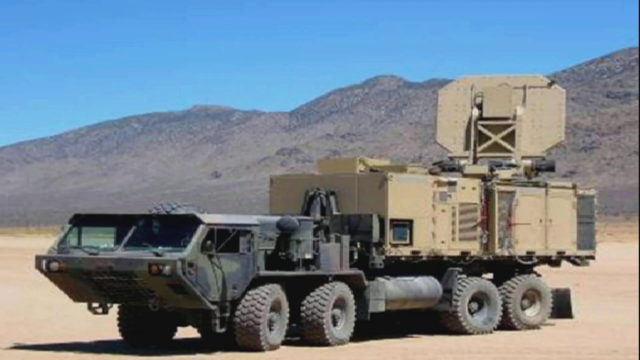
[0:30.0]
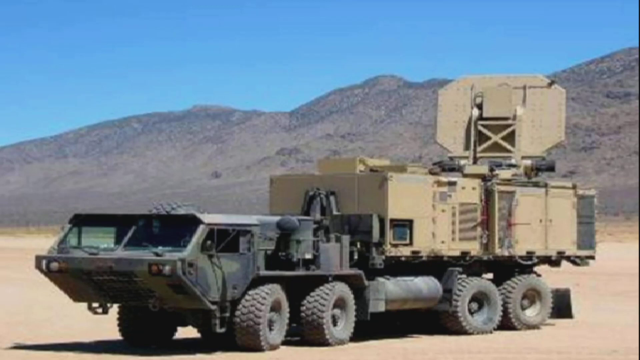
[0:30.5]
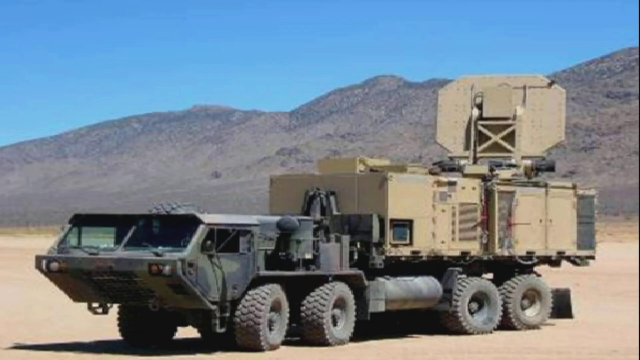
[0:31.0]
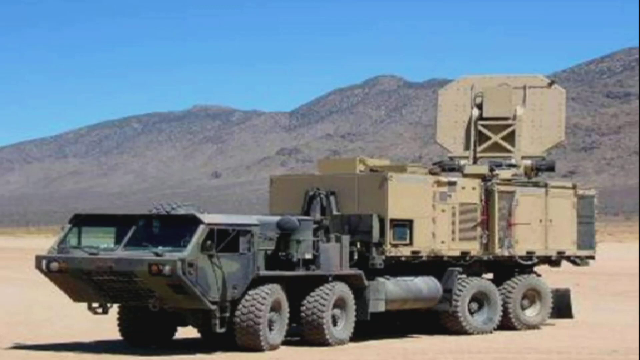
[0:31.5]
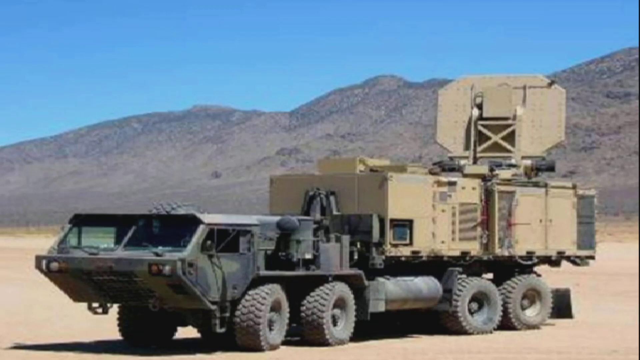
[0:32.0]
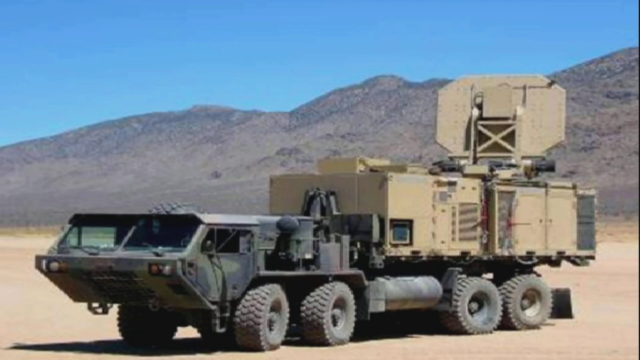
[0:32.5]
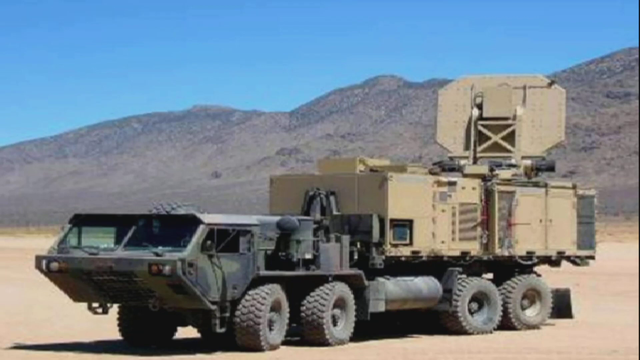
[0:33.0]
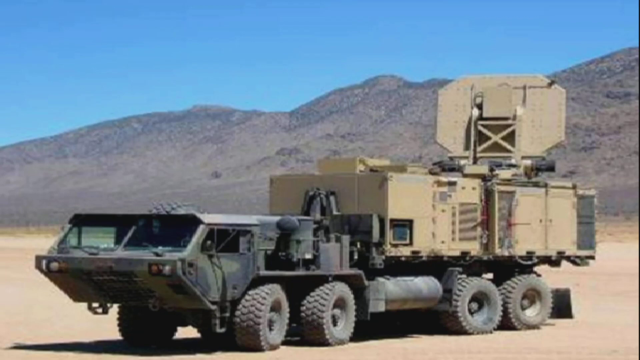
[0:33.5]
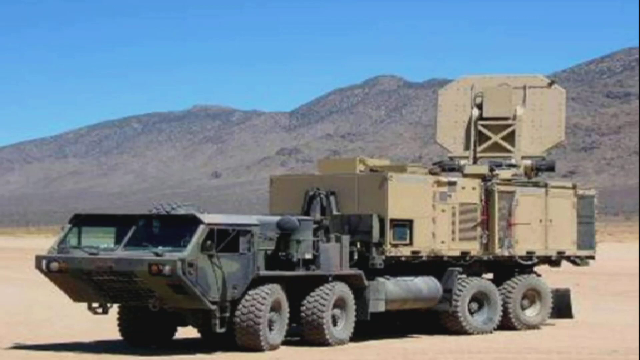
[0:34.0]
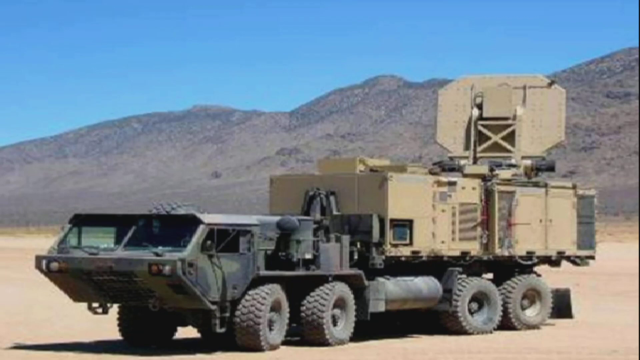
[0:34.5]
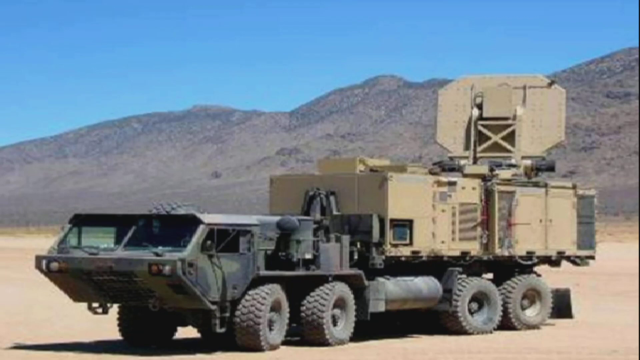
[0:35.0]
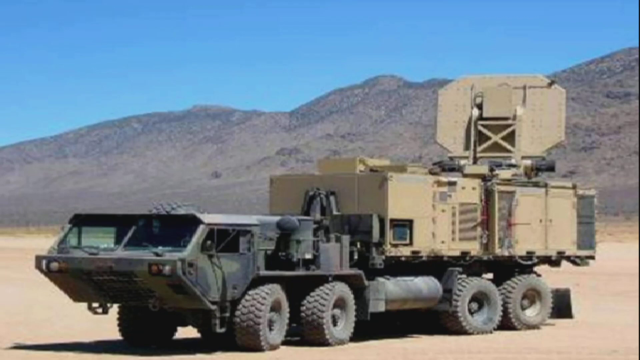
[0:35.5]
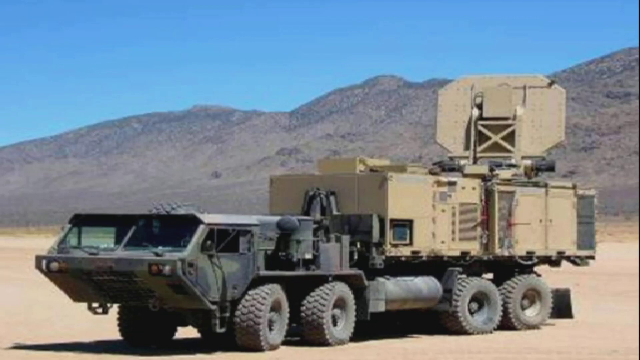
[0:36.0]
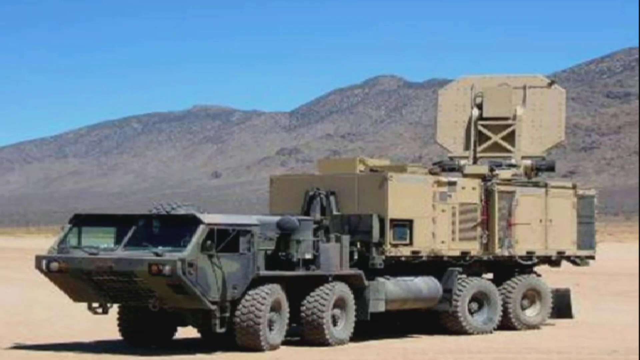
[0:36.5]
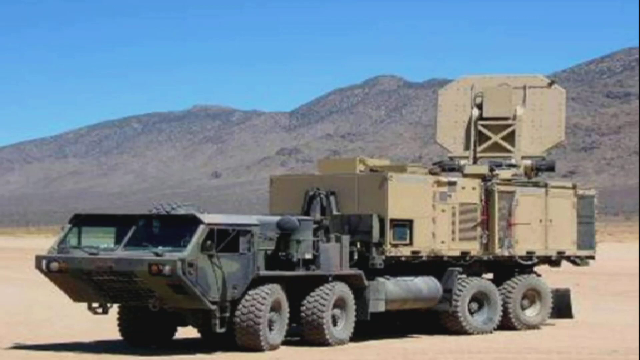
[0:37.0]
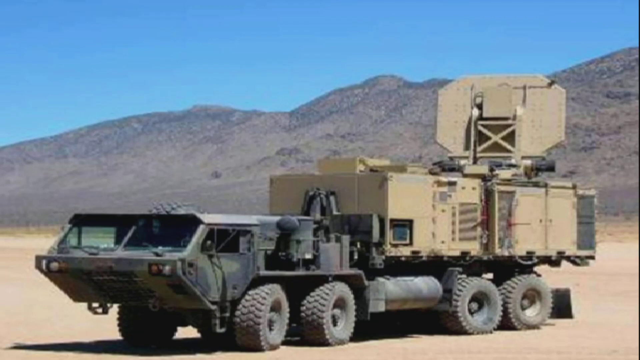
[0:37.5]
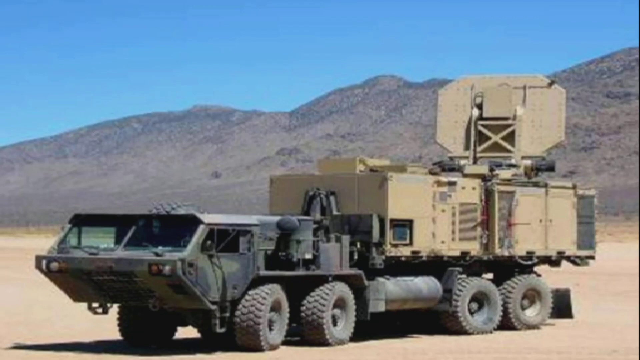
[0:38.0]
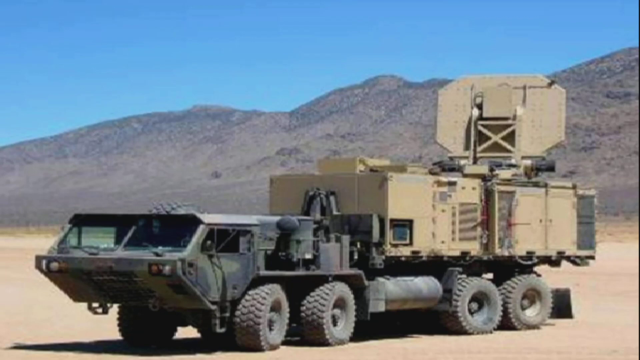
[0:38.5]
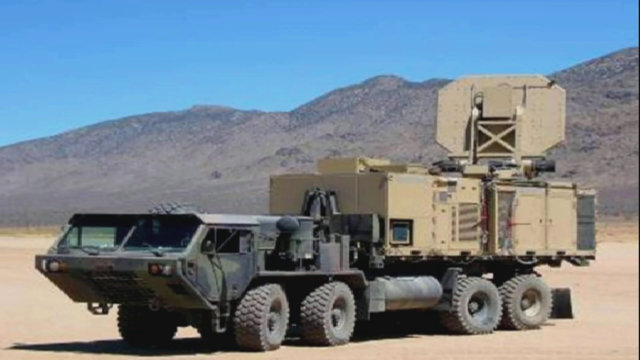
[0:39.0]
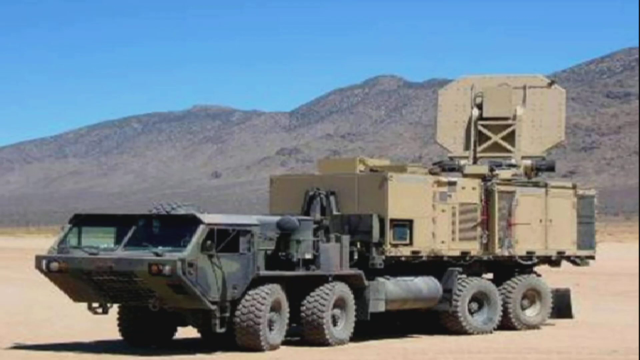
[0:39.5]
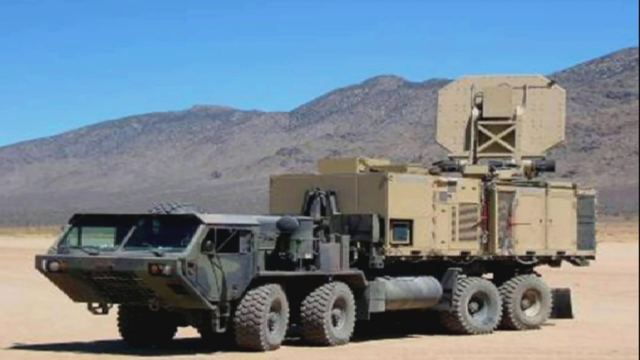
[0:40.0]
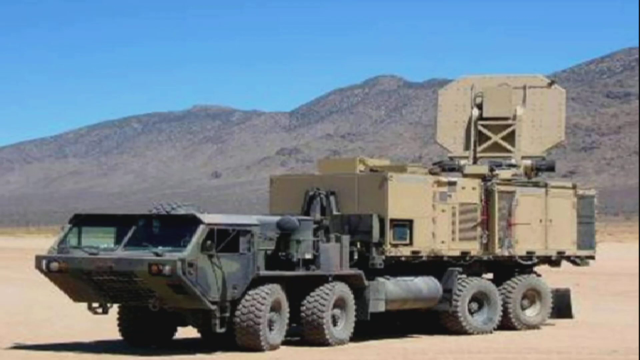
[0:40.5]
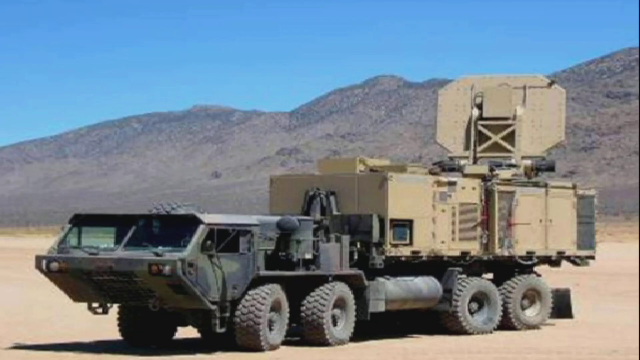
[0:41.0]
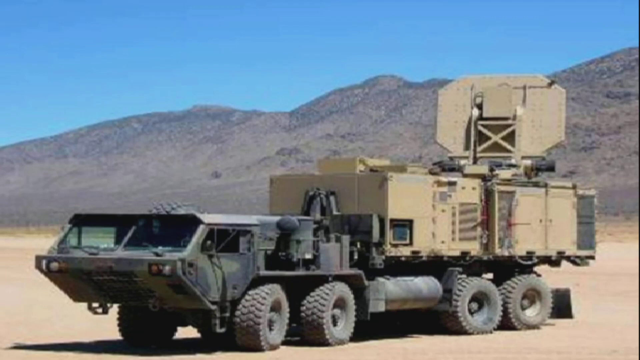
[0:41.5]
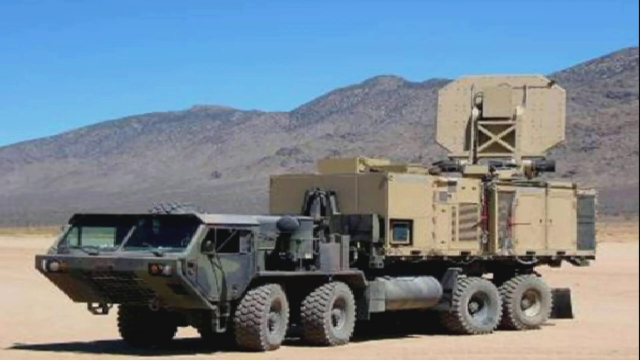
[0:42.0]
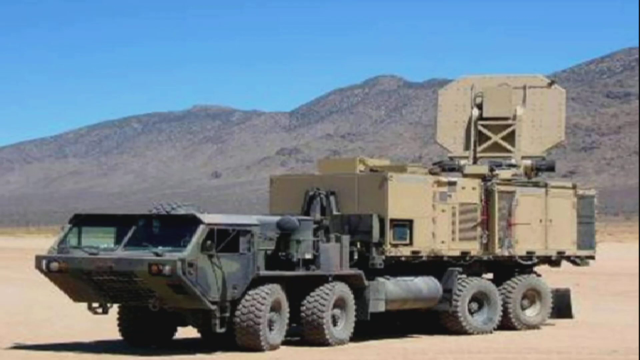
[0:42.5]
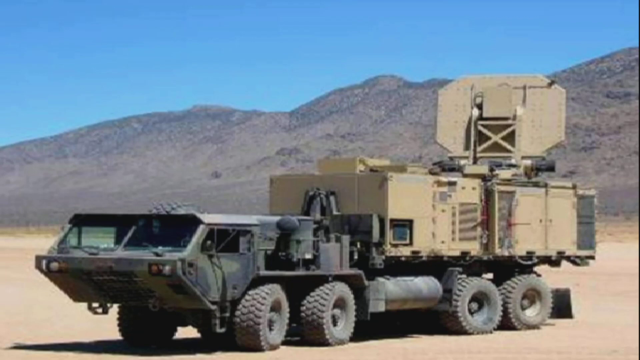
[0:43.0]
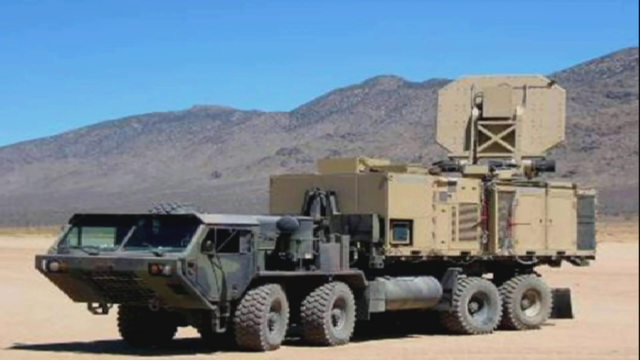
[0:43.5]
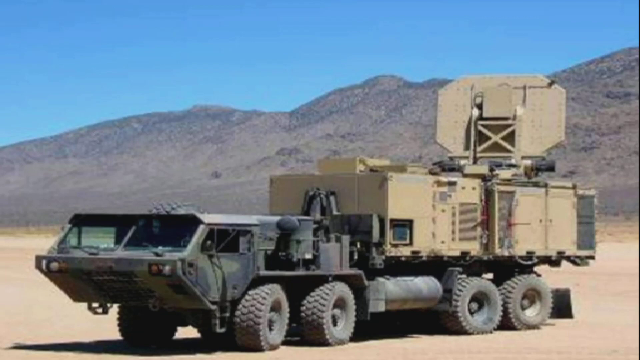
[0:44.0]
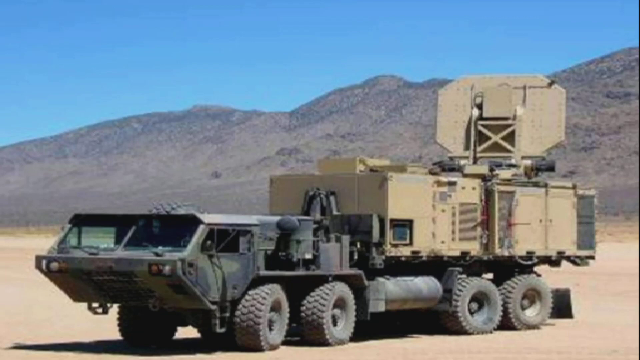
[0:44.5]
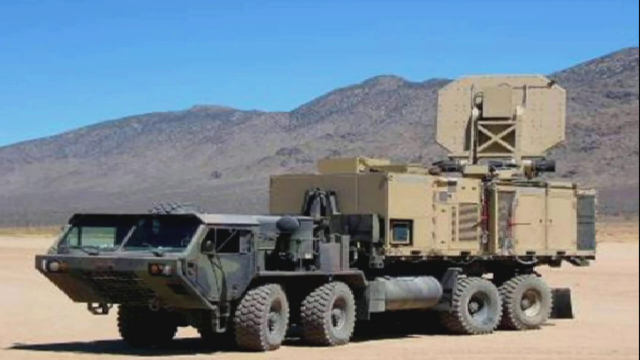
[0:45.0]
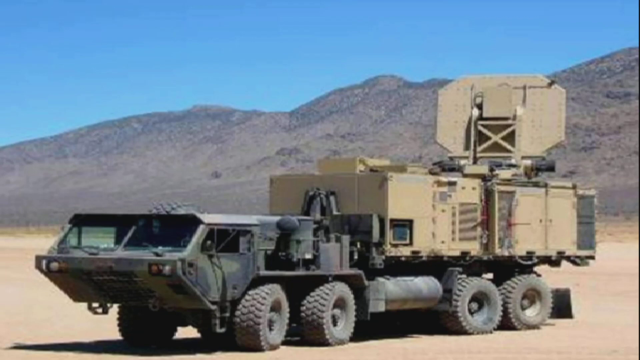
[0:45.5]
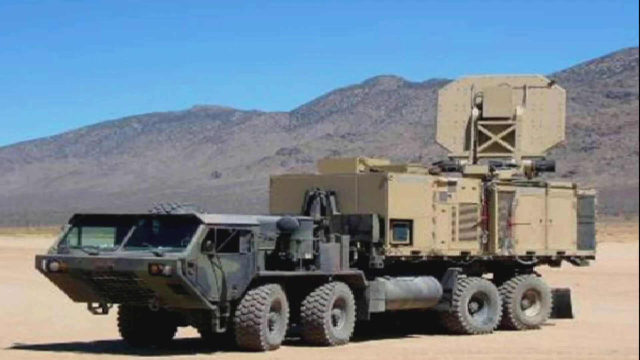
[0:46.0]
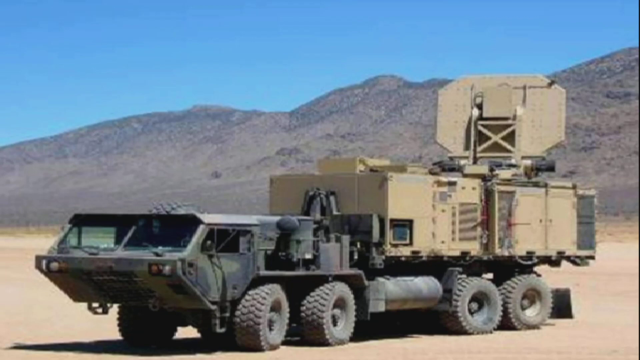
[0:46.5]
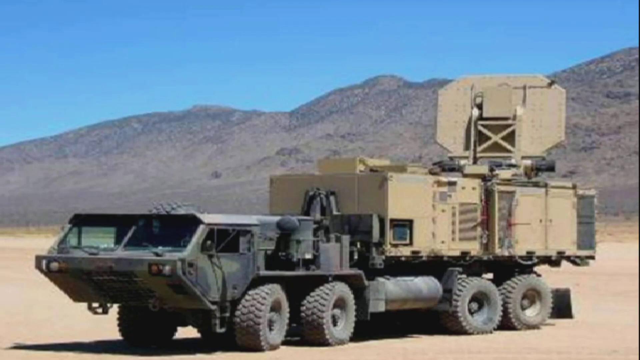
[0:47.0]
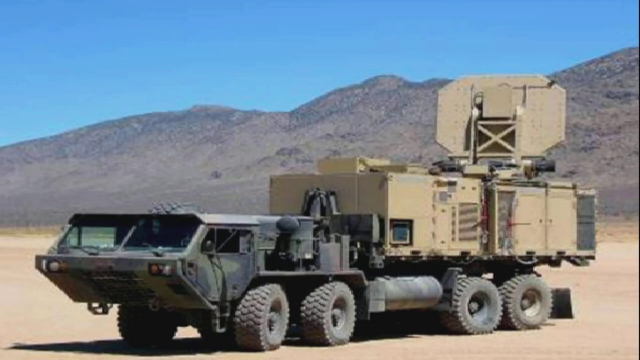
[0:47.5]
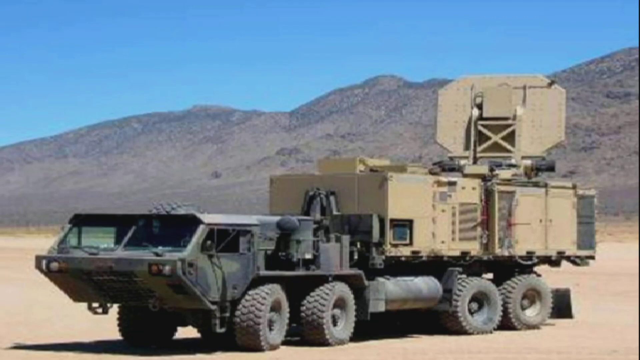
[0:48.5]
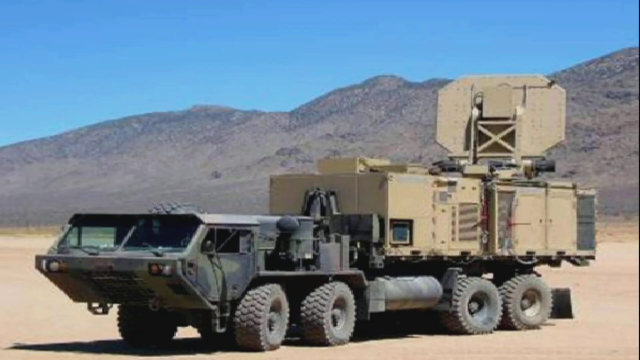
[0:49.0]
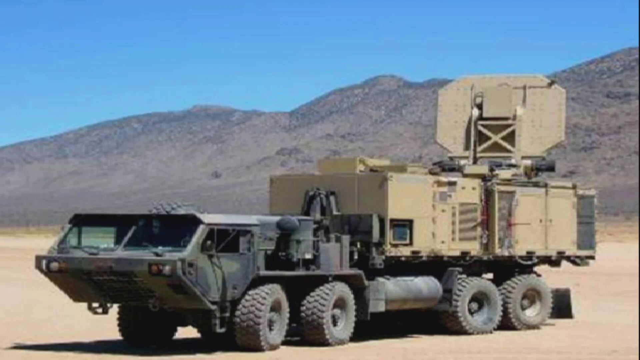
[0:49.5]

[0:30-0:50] The big soldiers' truck remains parked in the desert area with mountains behind it. It is open at the back and has very large wheels, and no one is inside. It looks very big and heavy.